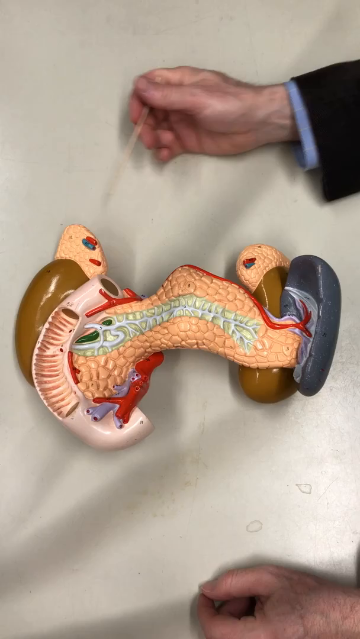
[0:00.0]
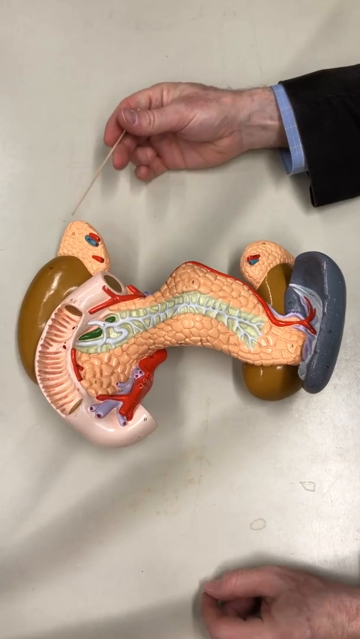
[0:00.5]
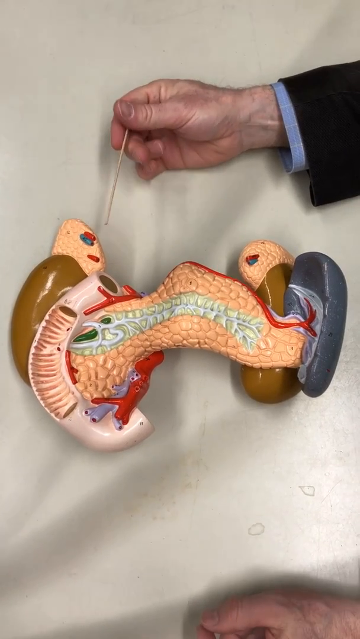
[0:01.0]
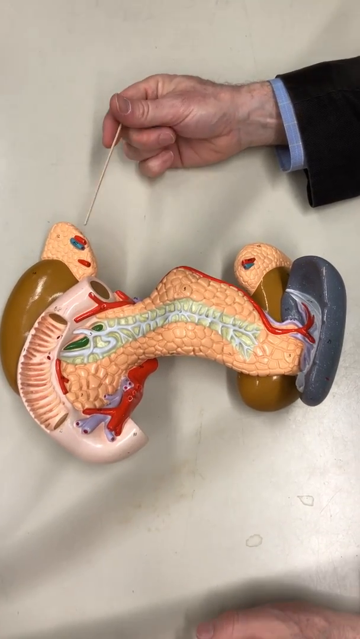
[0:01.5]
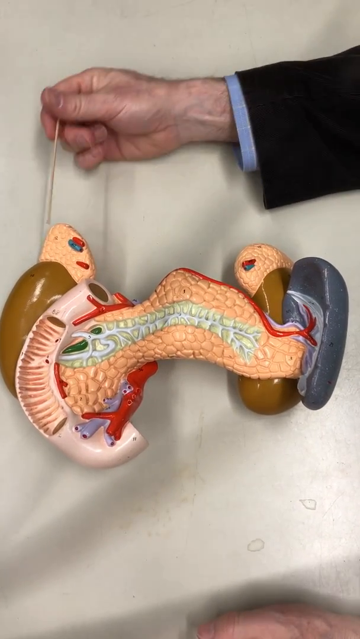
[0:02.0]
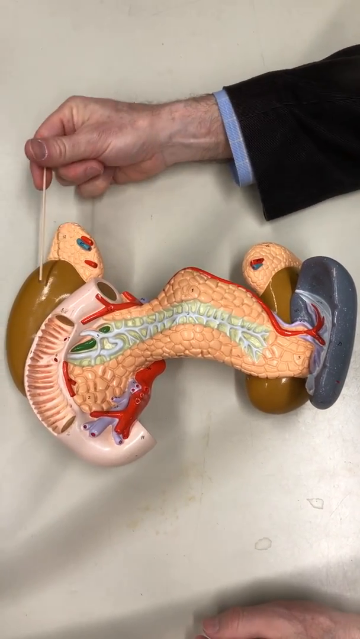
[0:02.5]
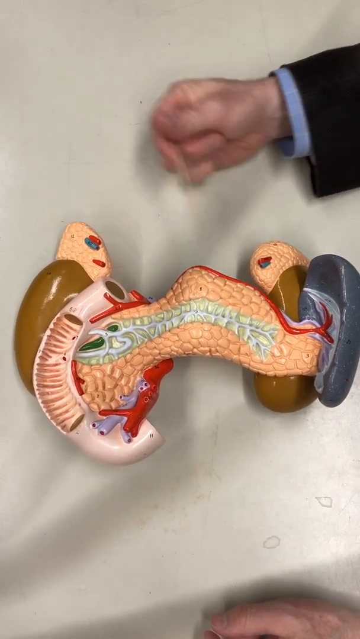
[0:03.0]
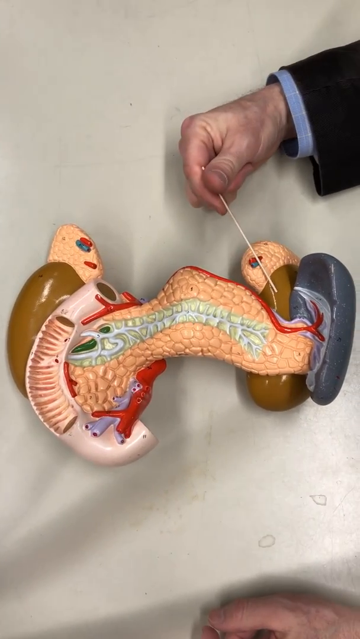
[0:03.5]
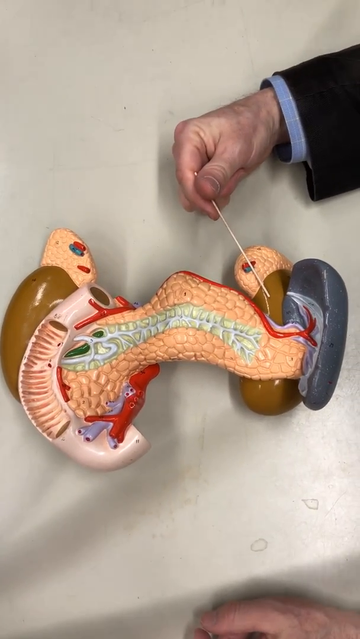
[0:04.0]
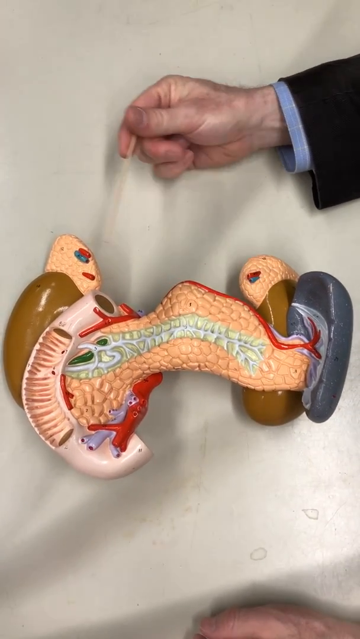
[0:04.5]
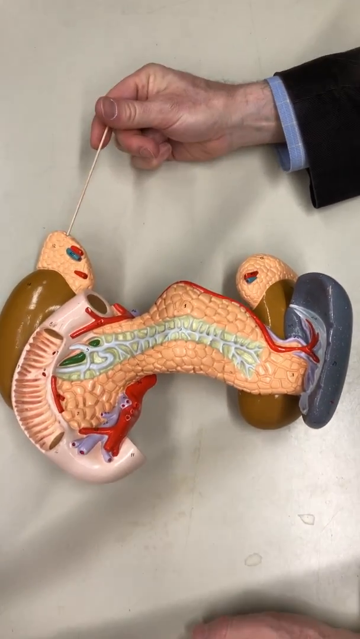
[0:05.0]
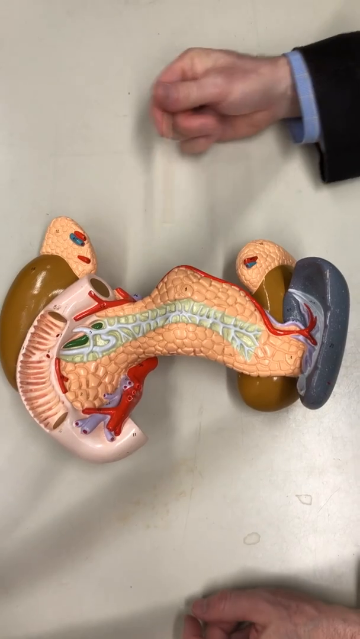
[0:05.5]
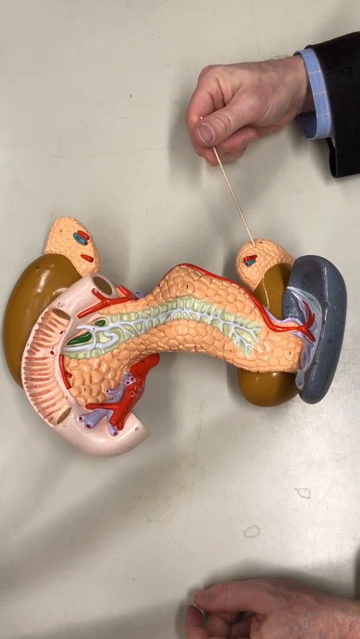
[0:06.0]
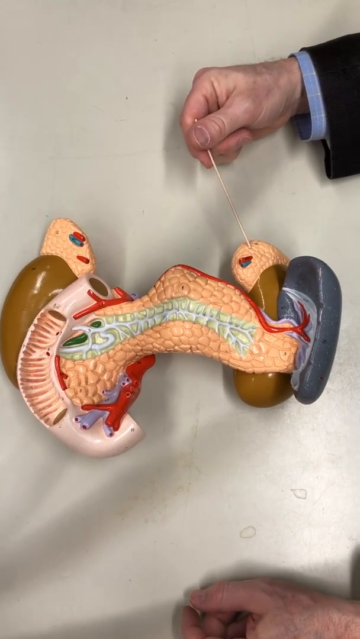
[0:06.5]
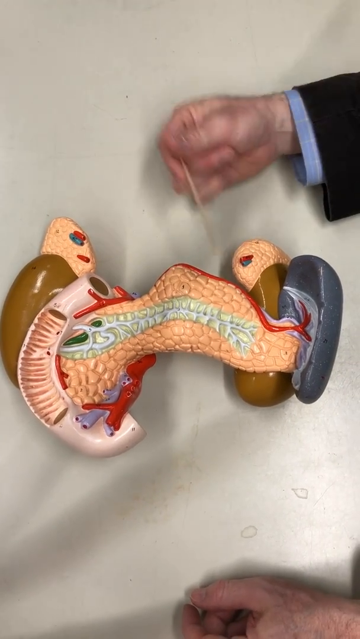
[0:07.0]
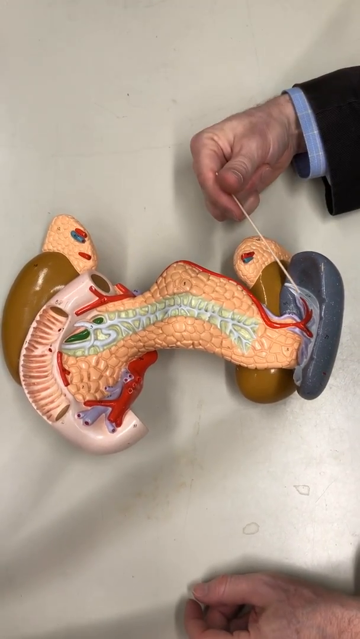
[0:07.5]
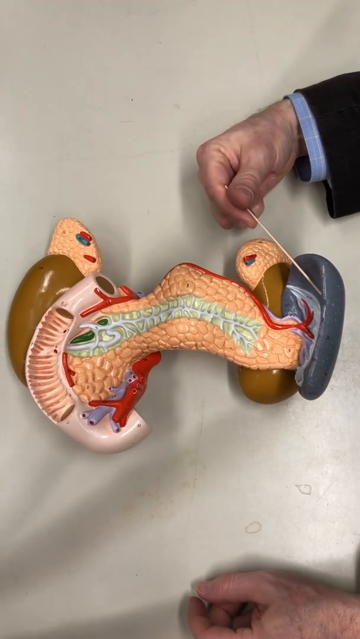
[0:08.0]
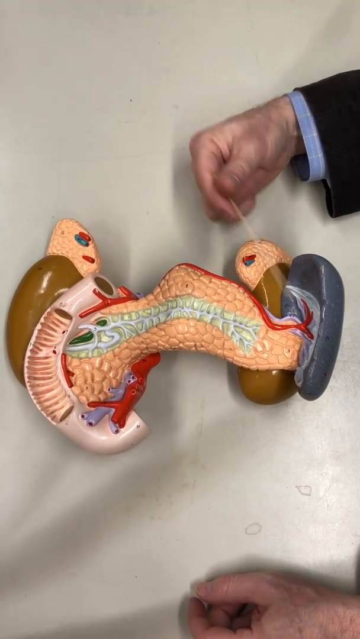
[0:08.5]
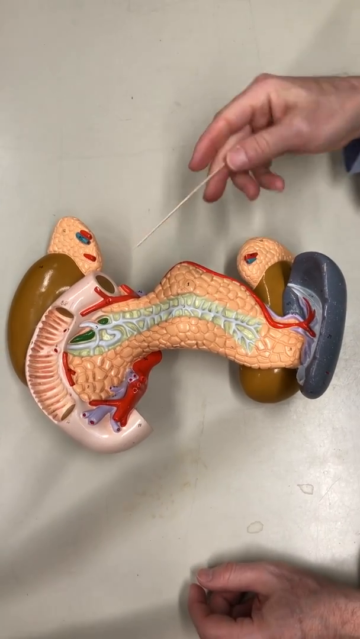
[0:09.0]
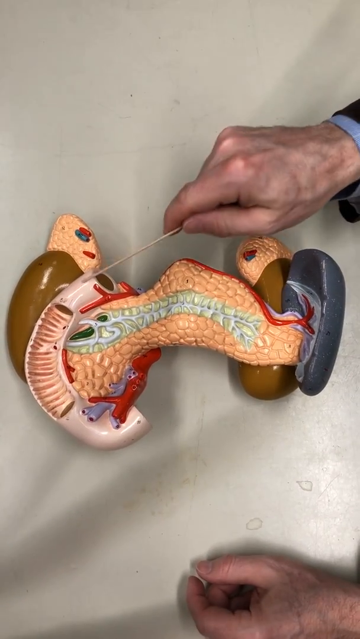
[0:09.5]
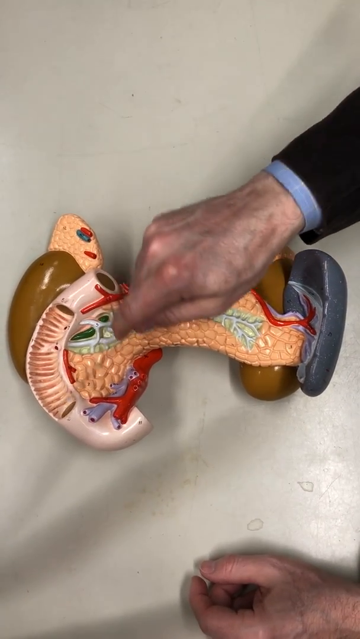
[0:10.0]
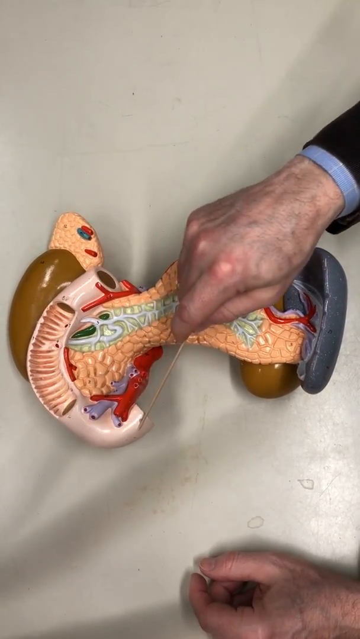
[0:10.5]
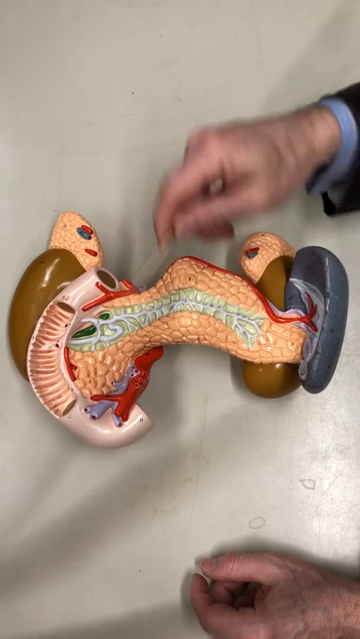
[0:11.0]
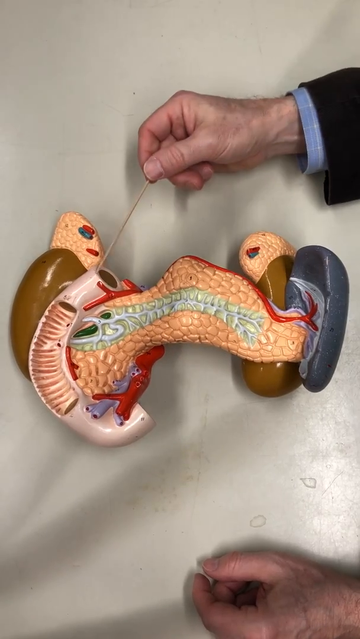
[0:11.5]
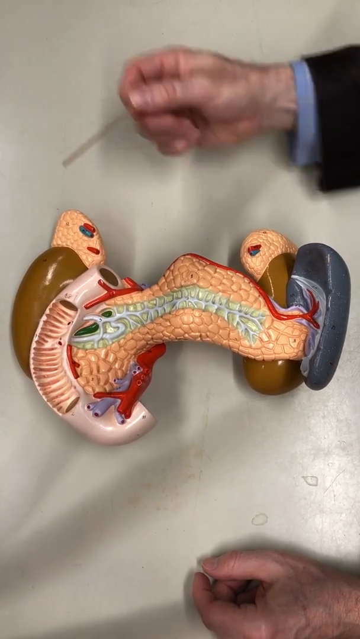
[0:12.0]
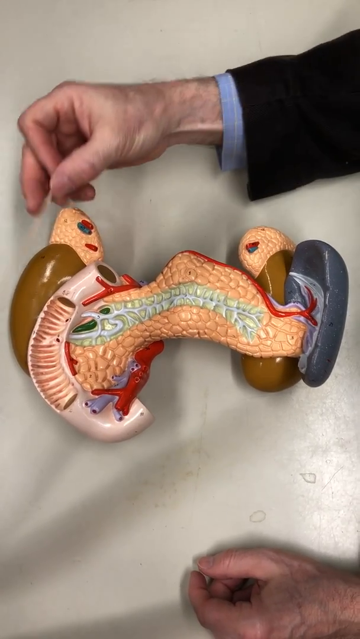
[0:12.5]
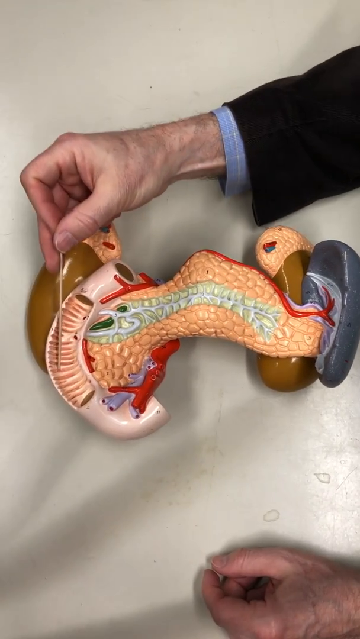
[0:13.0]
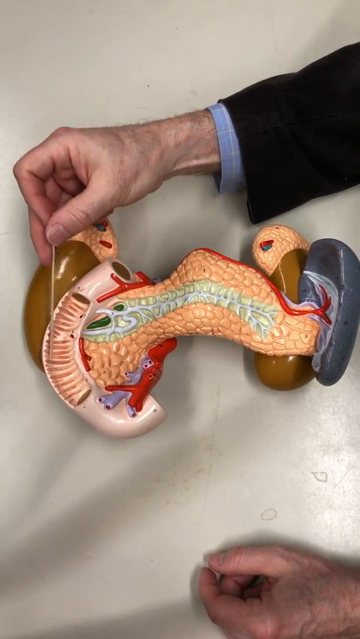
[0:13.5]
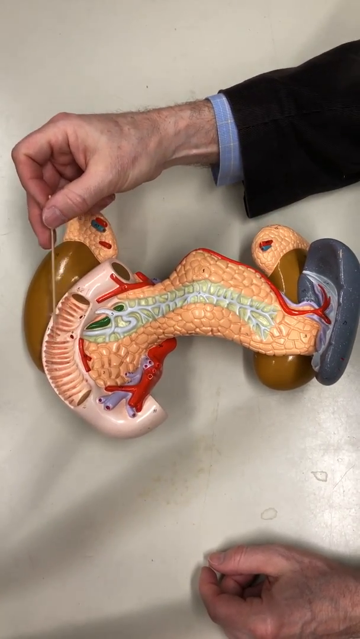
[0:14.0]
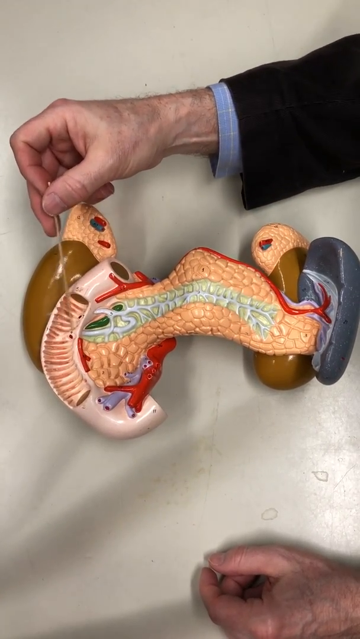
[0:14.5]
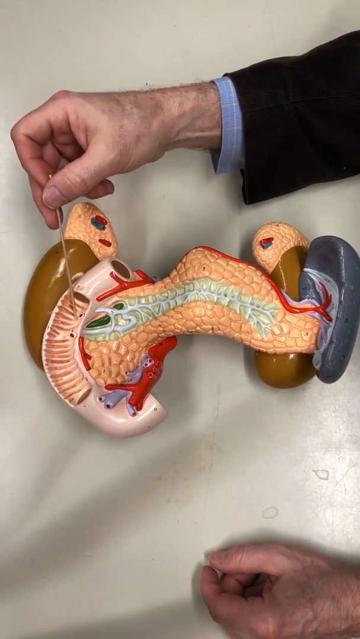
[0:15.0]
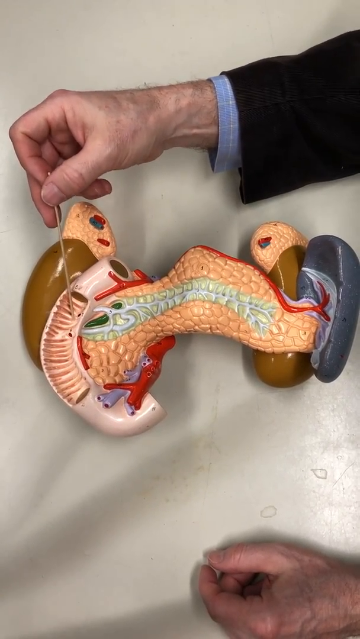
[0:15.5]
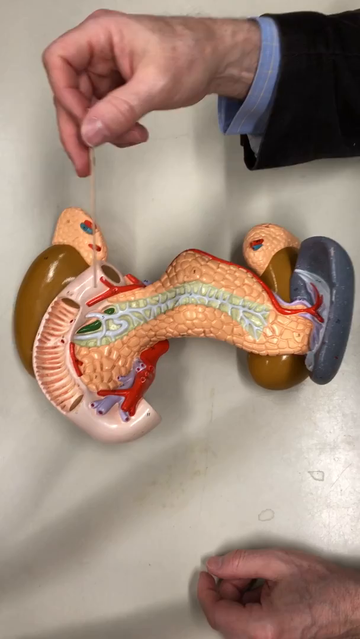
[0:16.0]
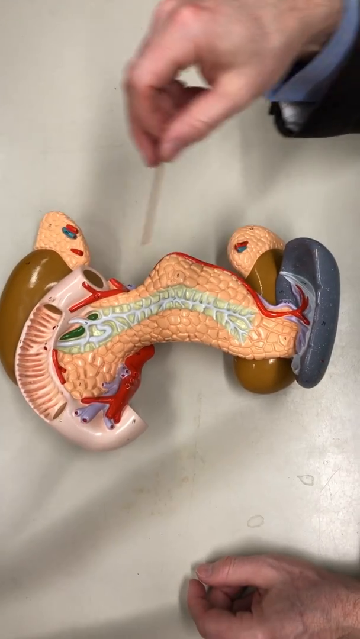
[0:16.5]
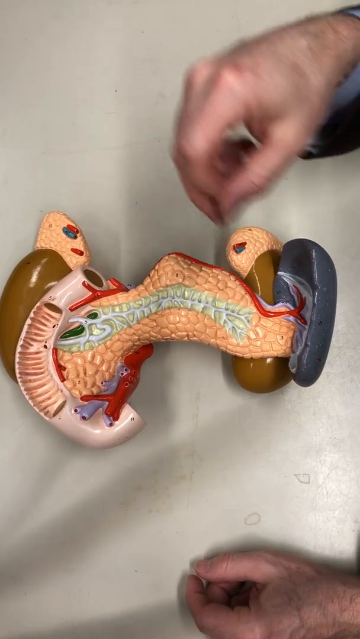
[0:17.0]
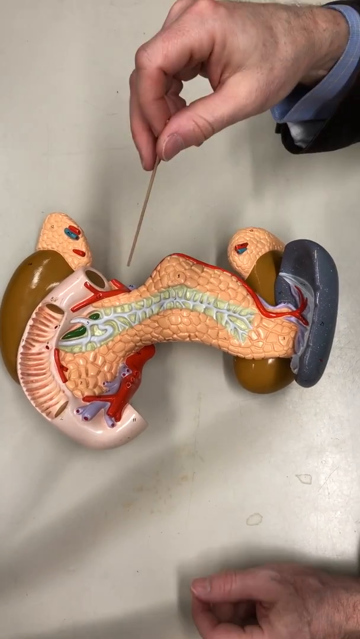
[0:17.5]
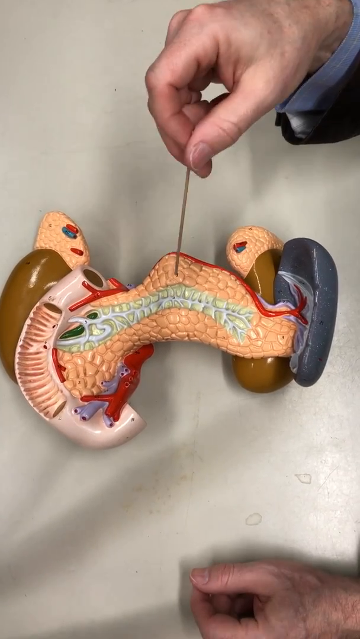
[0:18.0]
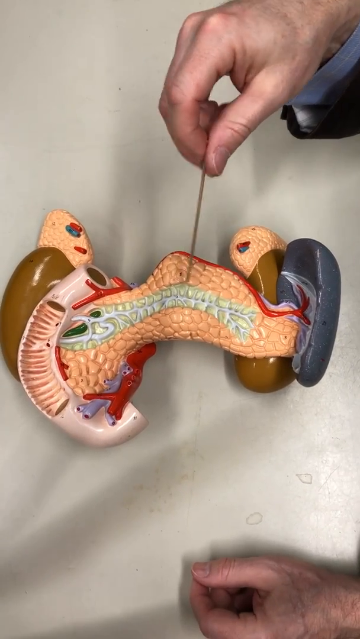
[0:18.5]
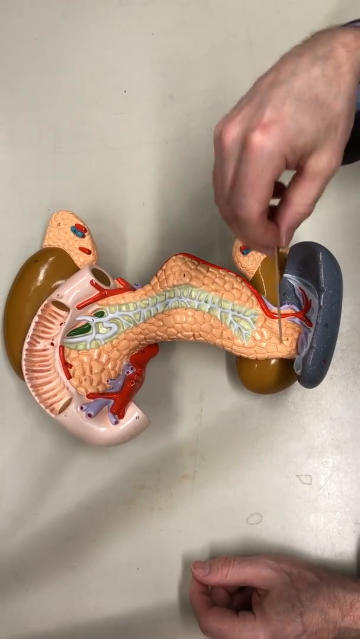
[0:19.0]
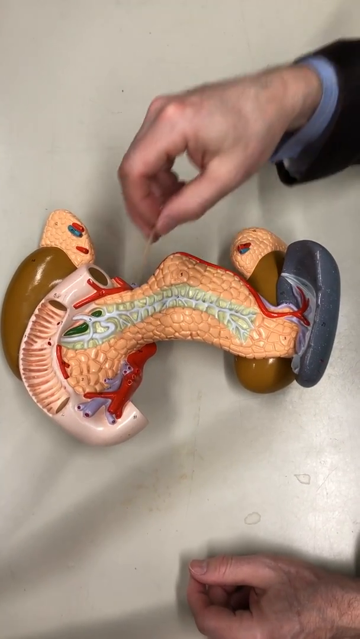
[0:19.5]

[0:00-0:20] A person wearing a black jacket and a blue hat is partly visible. Something that looks like a snake appears on the inside of a body. One hand points at something at the bottom, while the other hand shows the parts; it looks like the parts are being named and explained one by one. The object looks like the insides of a person, but it also looks like a crocodile. Vials go to different areas of the body, and there is what looks like the liver along with something black that is unidentified.